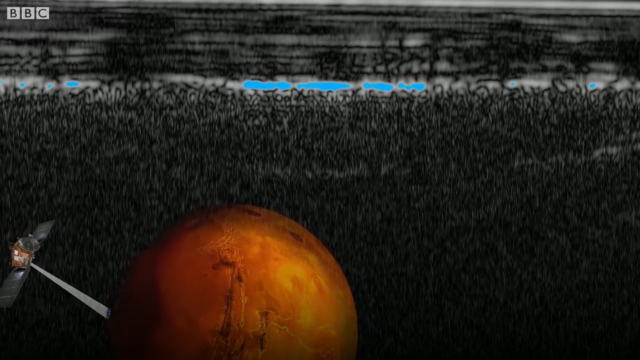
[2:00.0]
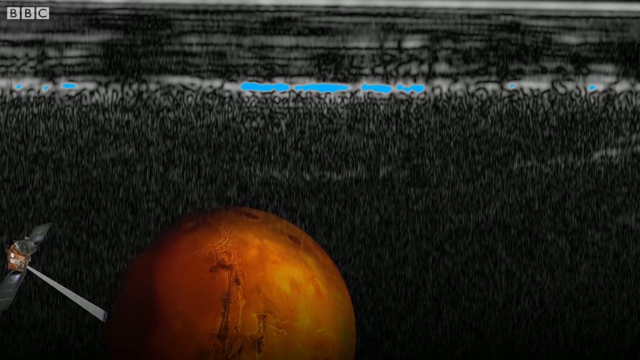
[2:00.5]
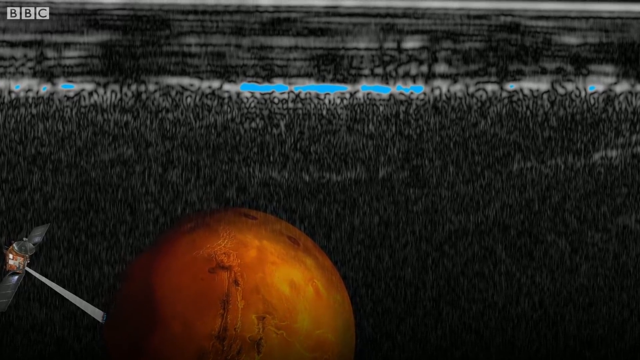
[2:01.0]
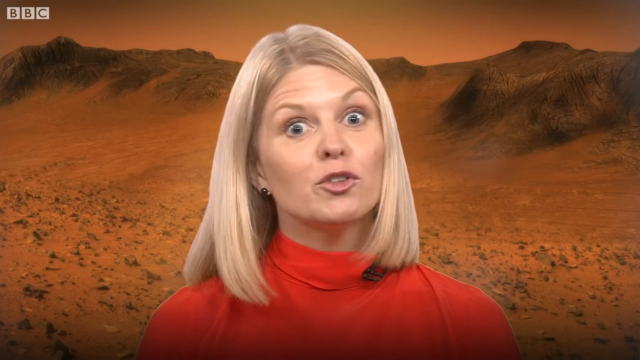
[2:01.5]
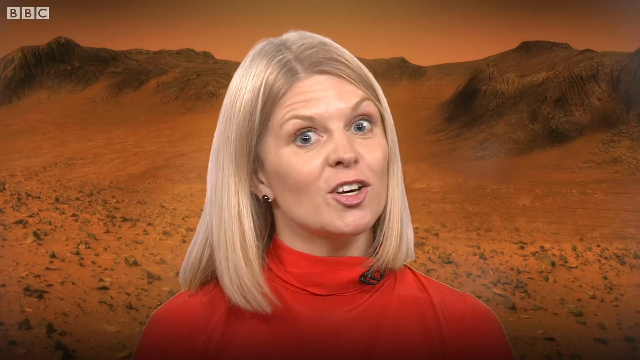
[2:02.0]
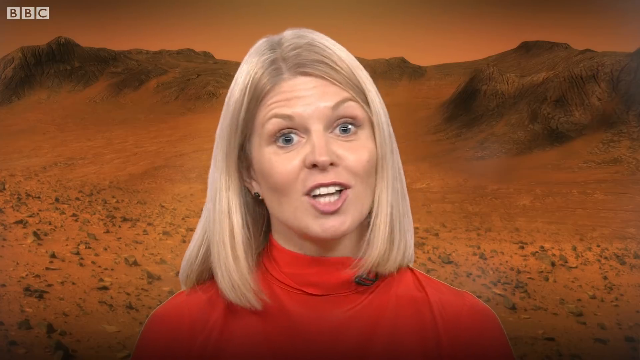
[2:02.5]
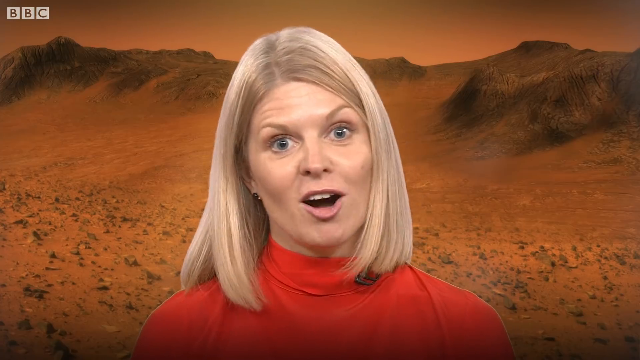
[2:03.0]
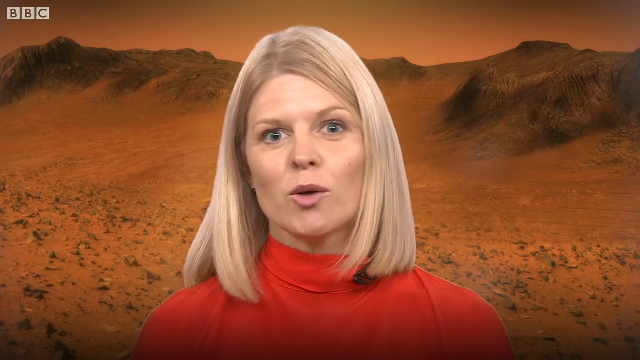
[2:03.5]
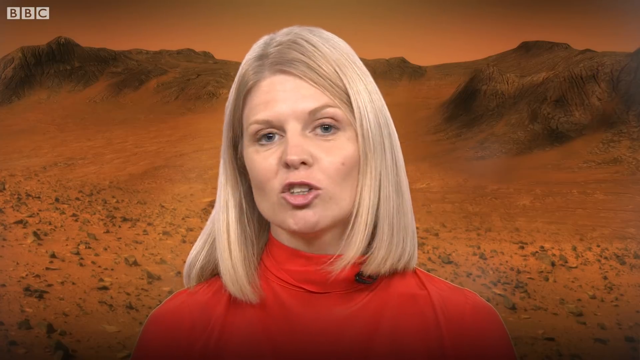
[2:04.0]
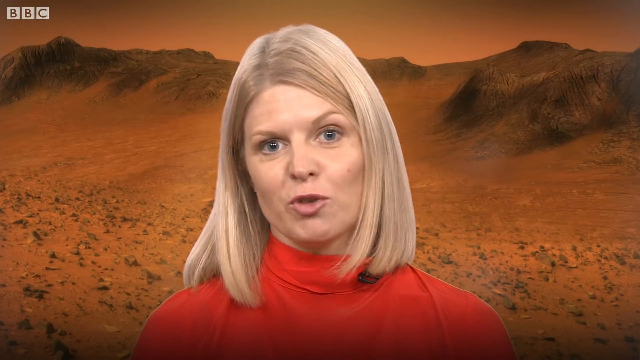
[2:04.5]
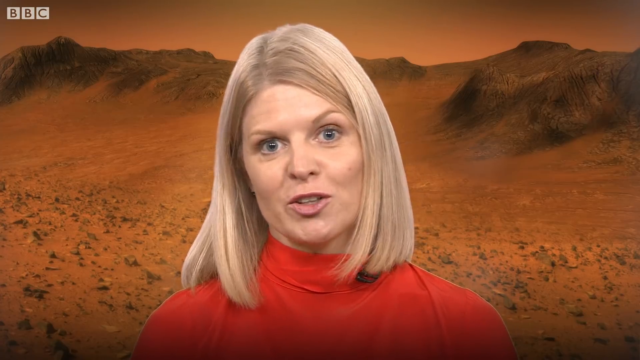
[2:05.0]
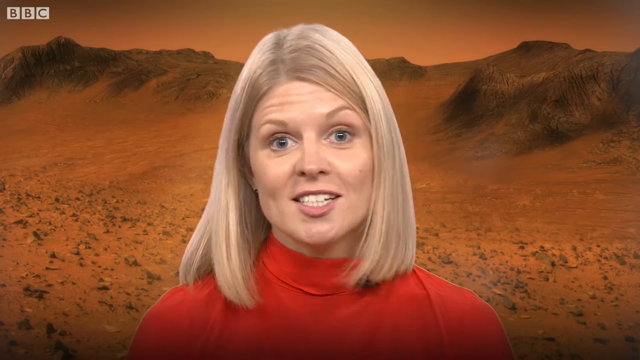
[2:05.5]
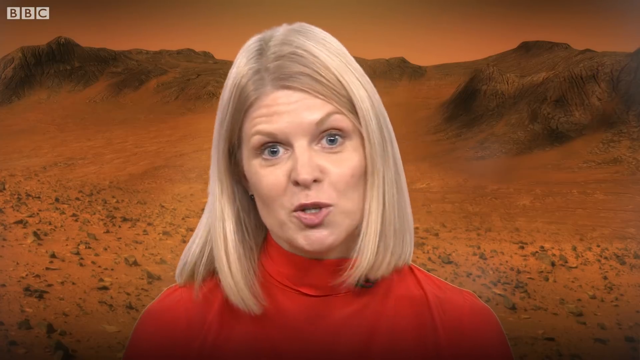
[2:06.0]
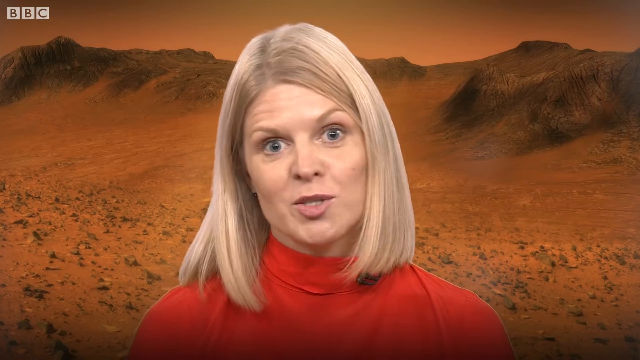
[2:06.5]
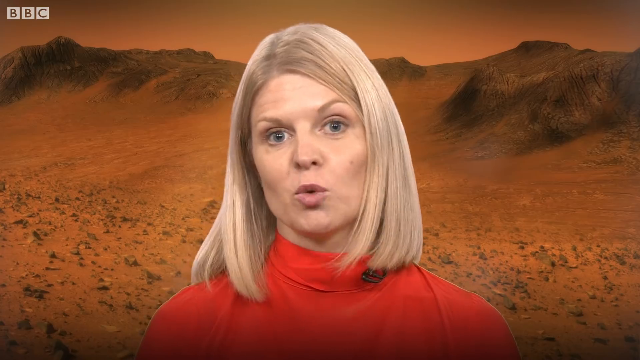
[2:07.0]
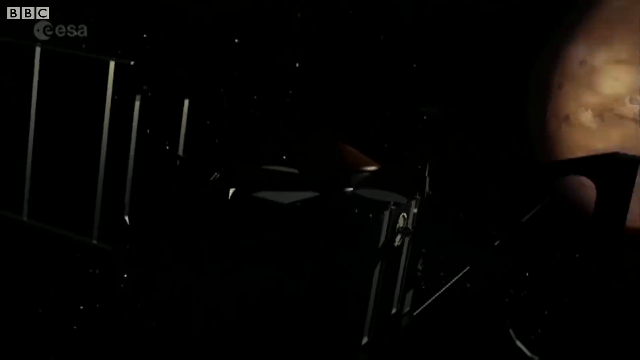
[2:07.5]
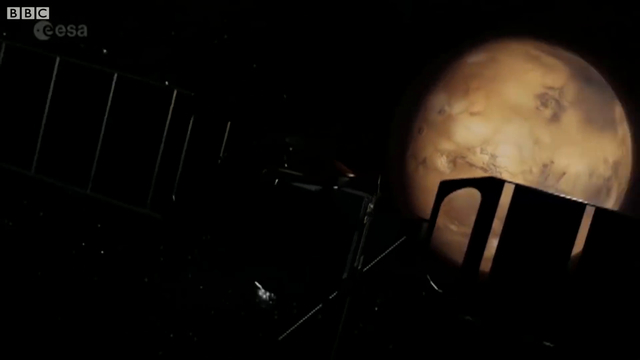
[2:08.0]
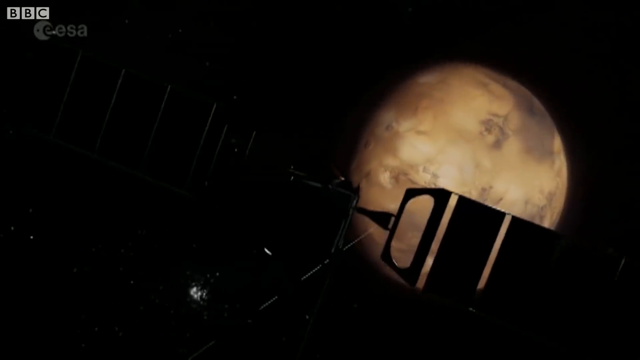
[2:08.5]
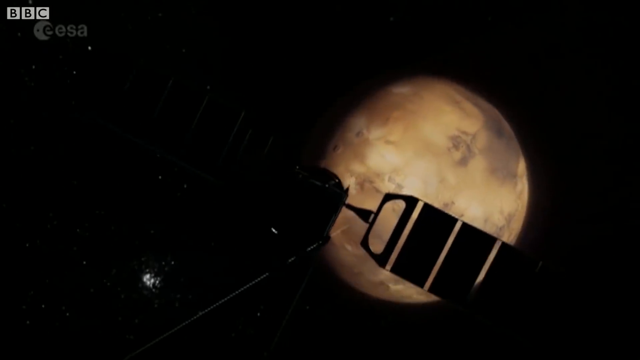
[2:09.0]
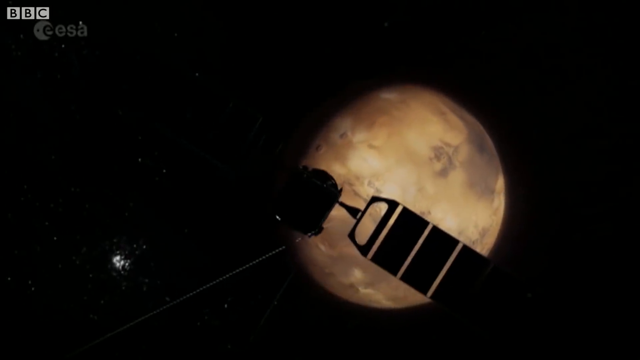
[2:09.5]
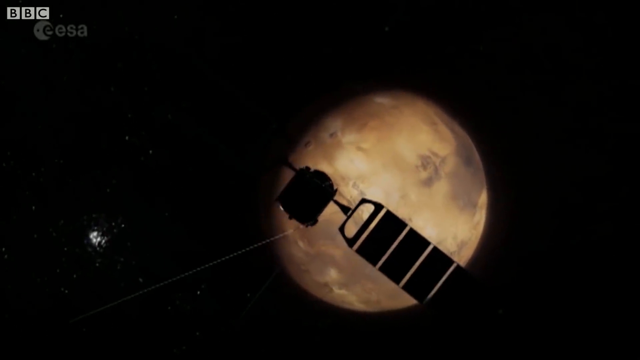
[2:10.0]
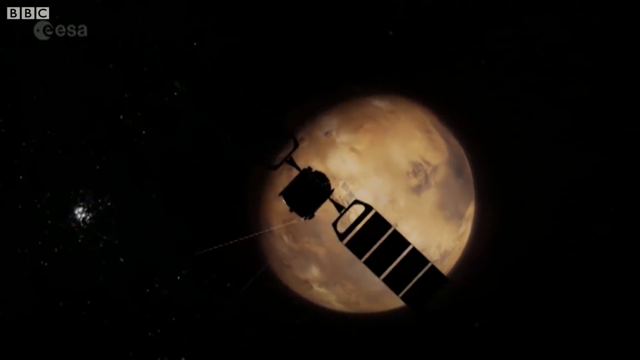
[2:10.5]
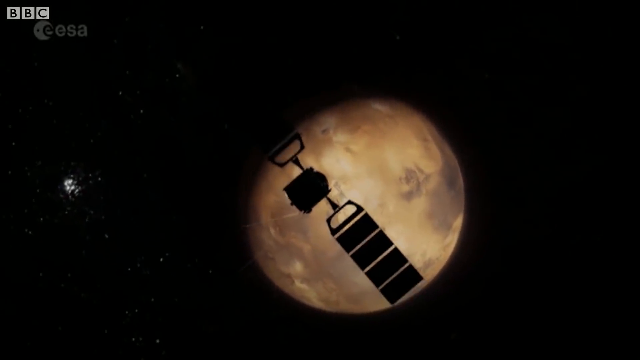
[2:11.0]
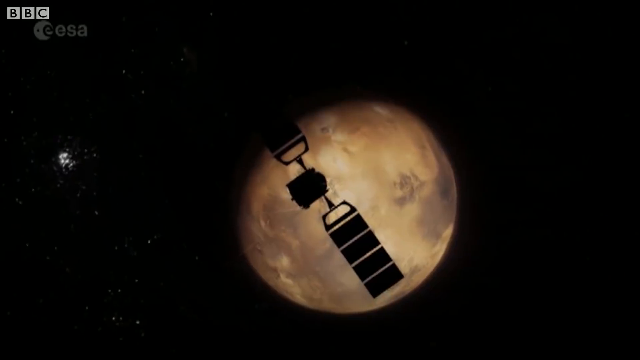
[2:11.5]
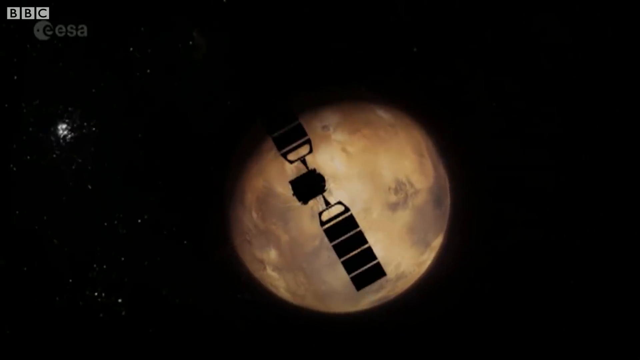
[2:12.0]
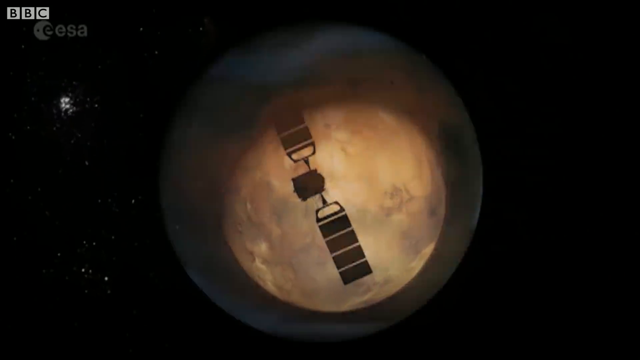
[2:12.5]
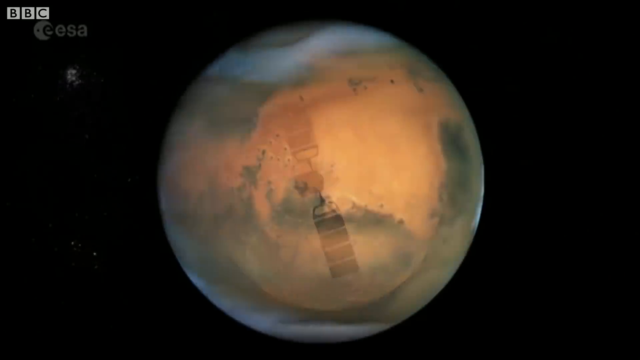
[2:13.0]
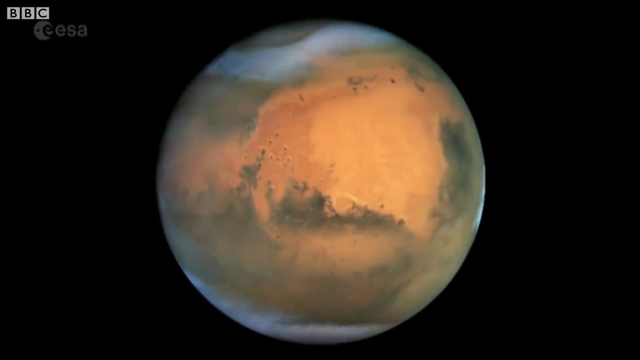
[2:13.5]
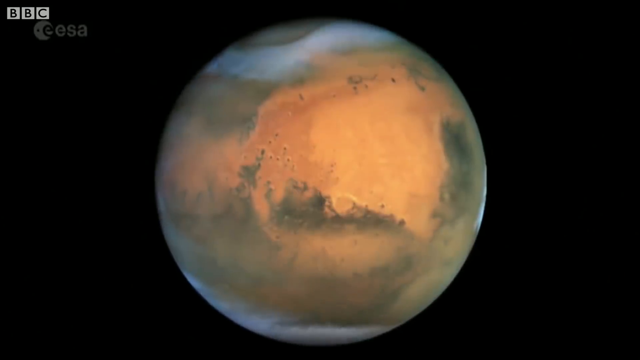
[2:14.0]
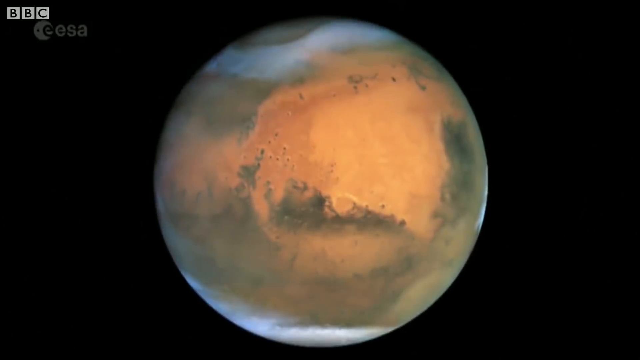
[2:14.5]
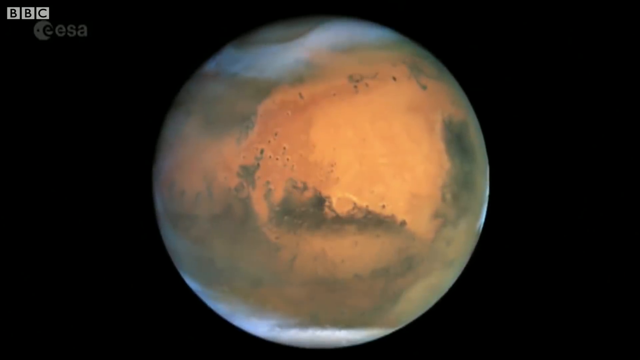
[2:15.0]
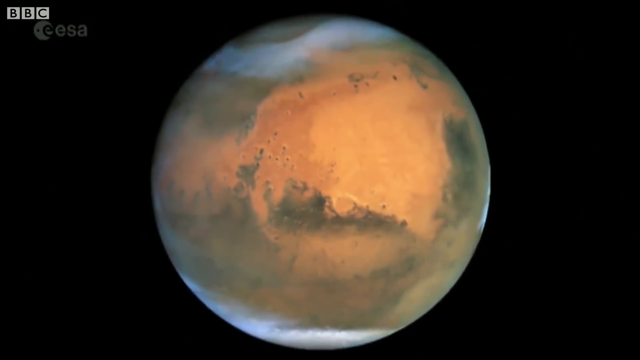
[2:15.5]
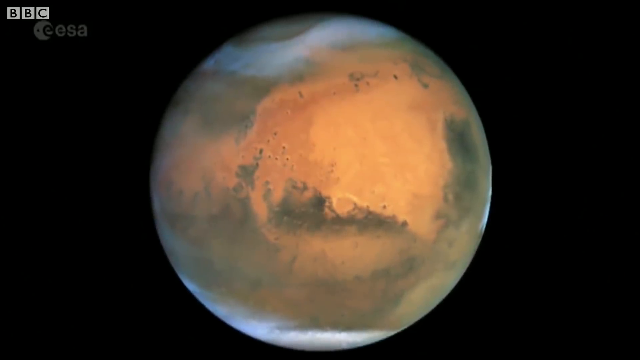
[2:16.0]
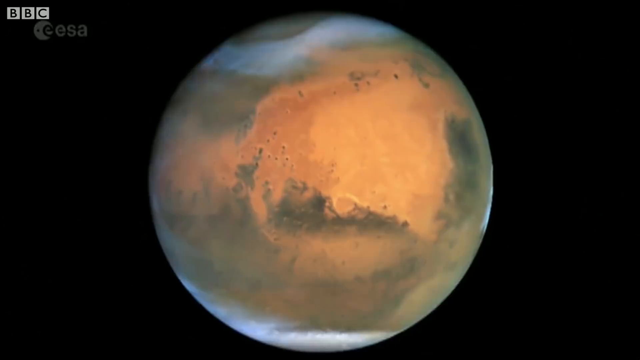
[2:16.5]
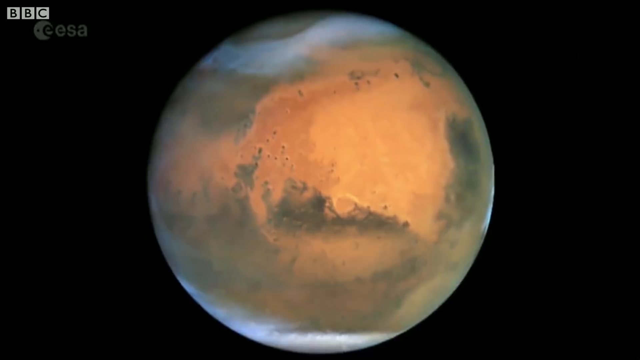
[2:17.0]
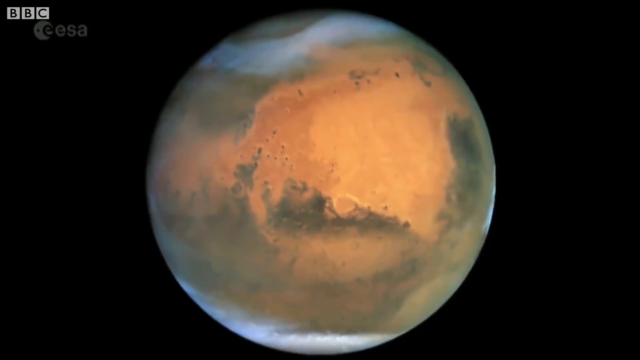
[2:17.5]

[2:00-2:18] A news presenter with long hair and a red top talks, with a microphone attached to her top. She stands in a desert-like setting with small hills. The BBC logo is at the top left, and she seems to be presenting on a TV screen. An animation of a planet then moves slowly from the top right to the center of the screen, with the writing "ESA" on the side of the screen. A satellite circles the planet and moves closer to it, focusing light on it. The planet then moves close to the camera and a warm light covers it. Finally the camera focuses only on the planet against a dark background.